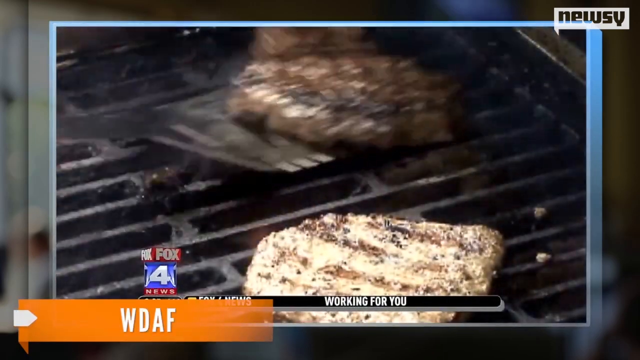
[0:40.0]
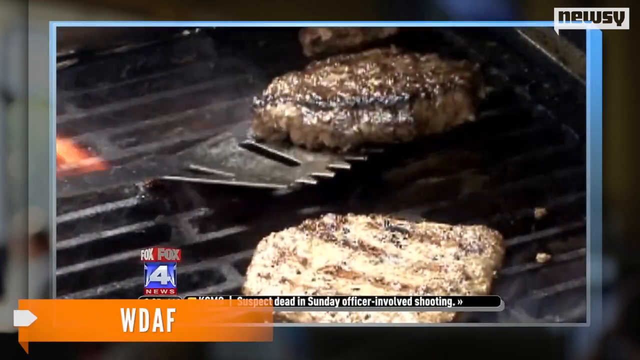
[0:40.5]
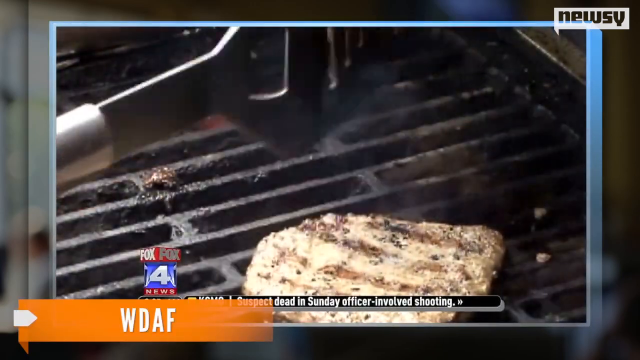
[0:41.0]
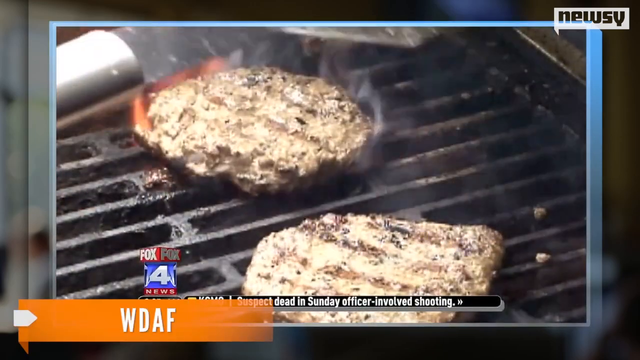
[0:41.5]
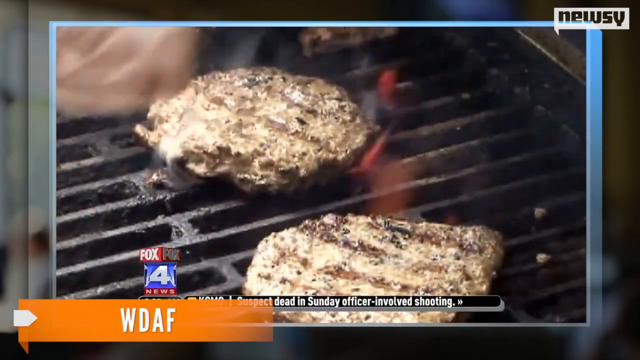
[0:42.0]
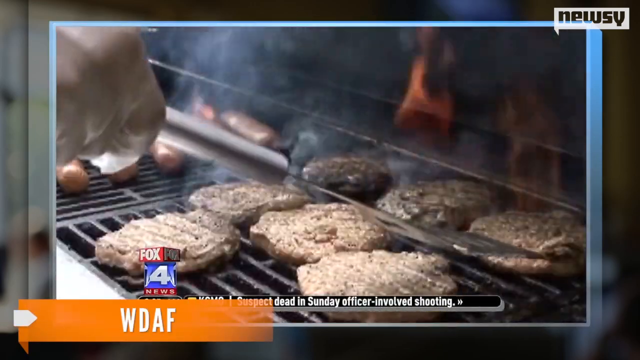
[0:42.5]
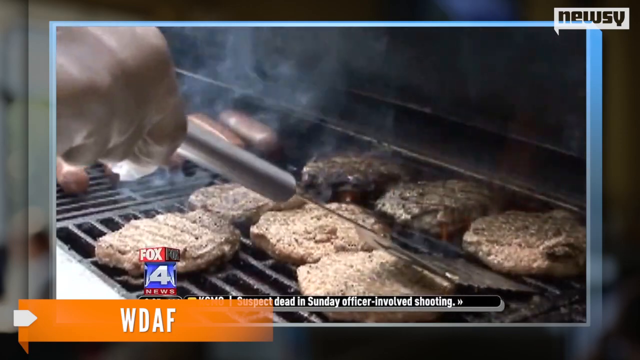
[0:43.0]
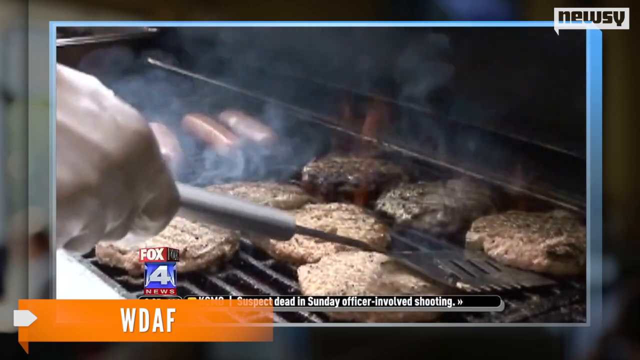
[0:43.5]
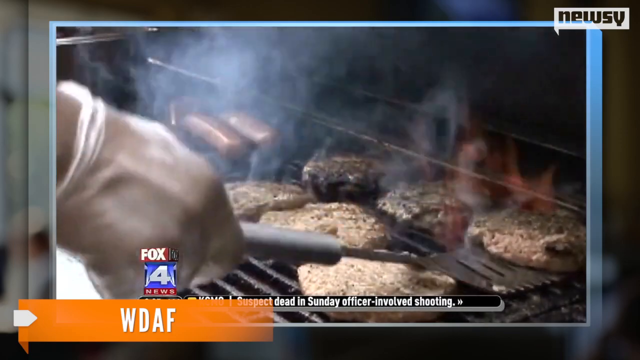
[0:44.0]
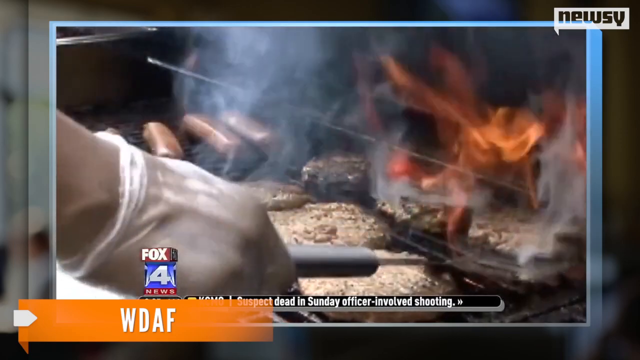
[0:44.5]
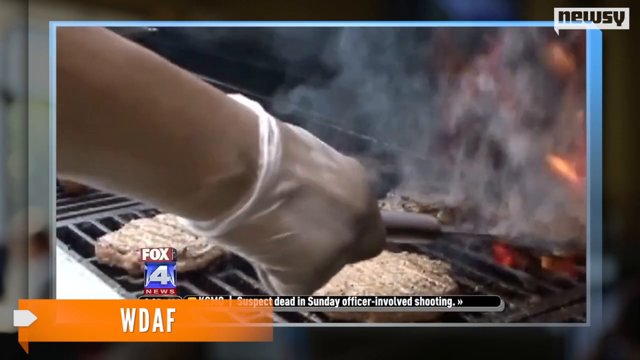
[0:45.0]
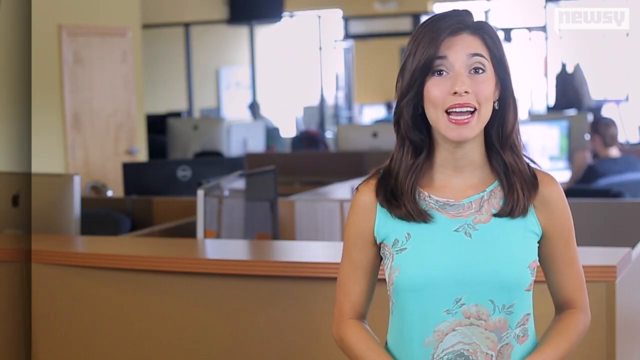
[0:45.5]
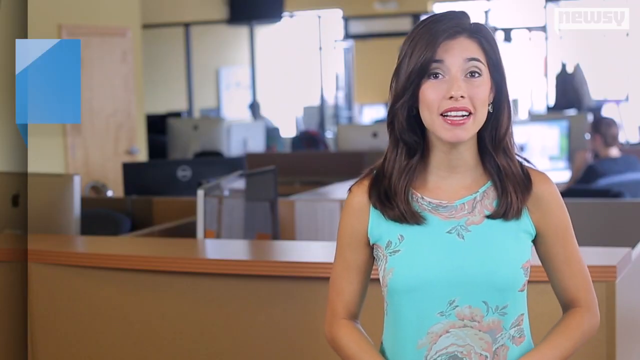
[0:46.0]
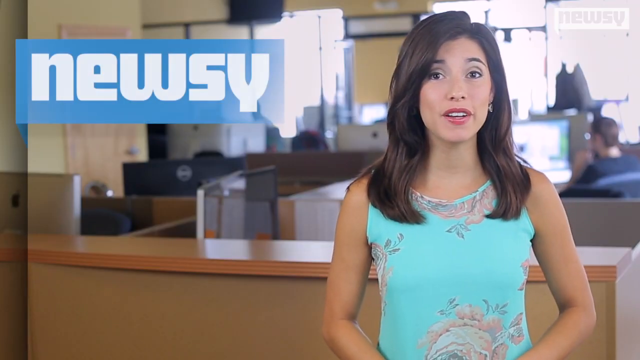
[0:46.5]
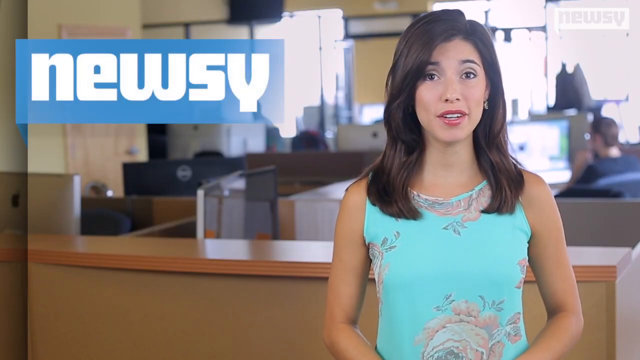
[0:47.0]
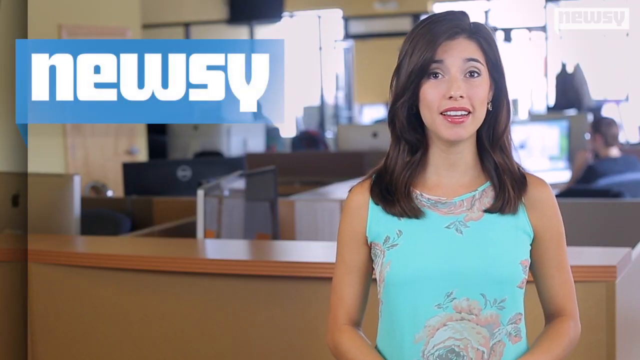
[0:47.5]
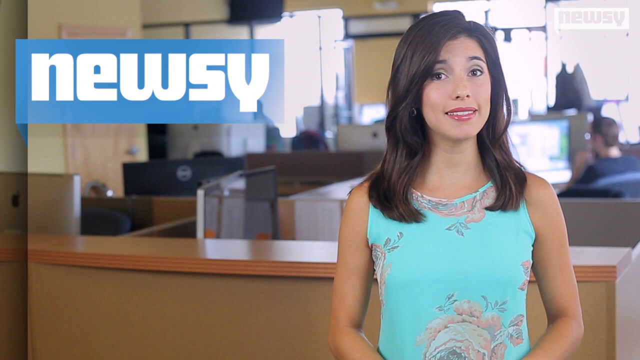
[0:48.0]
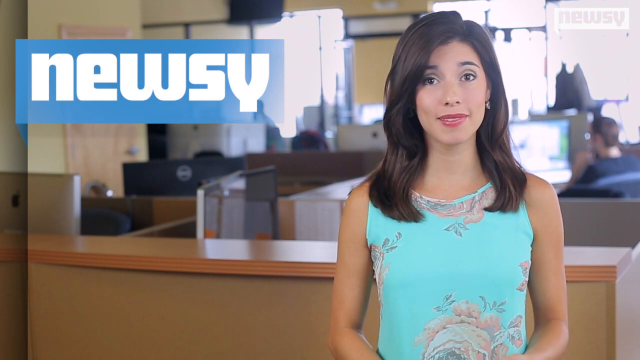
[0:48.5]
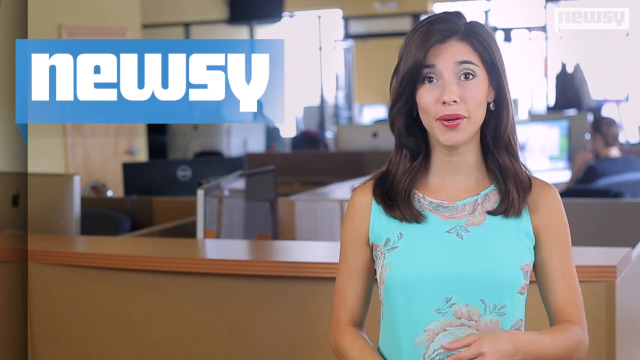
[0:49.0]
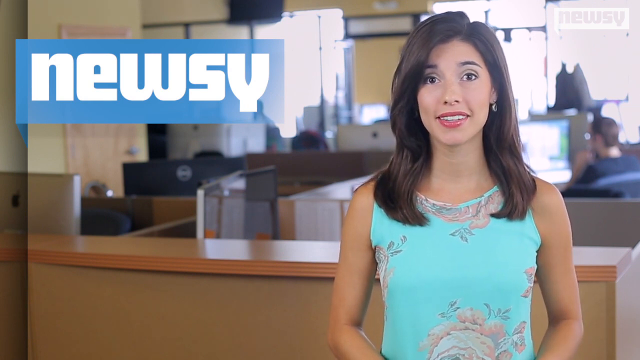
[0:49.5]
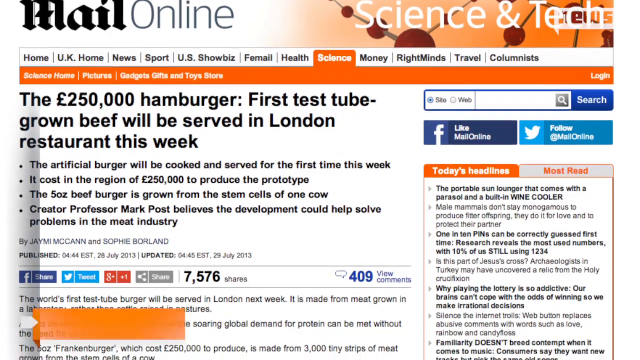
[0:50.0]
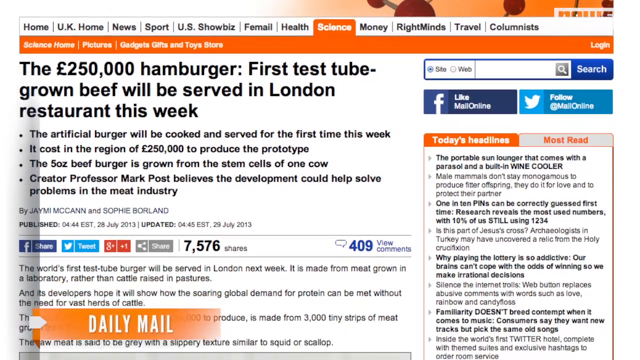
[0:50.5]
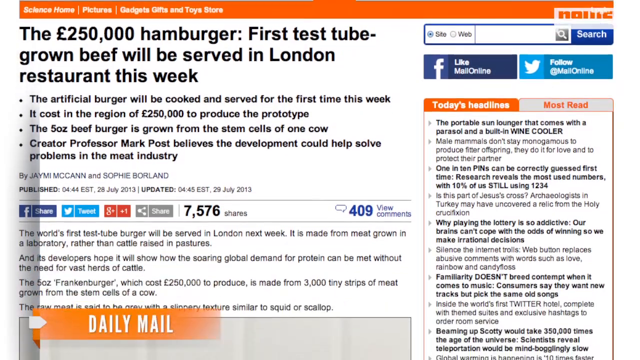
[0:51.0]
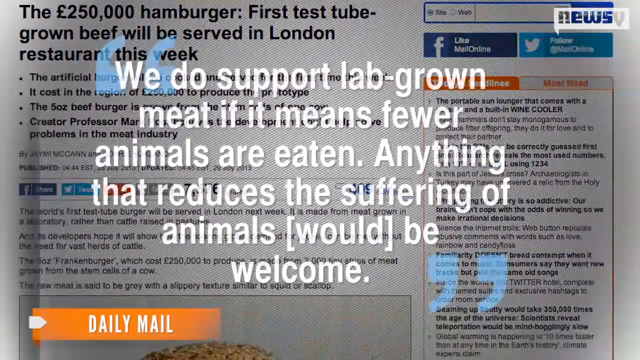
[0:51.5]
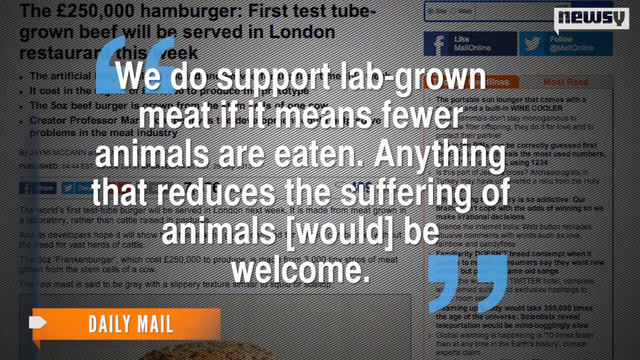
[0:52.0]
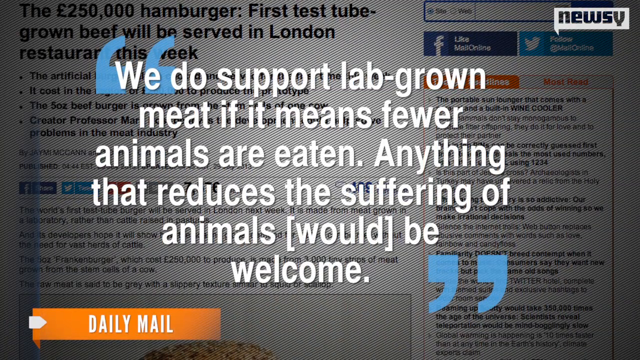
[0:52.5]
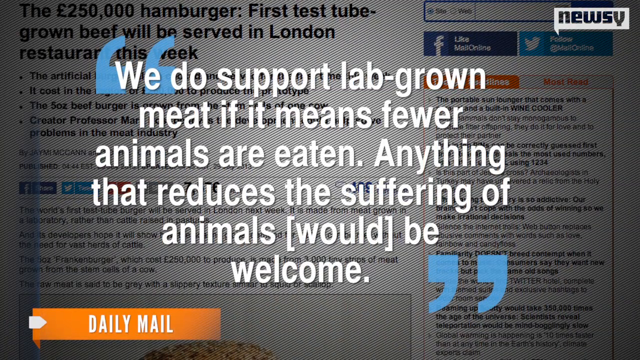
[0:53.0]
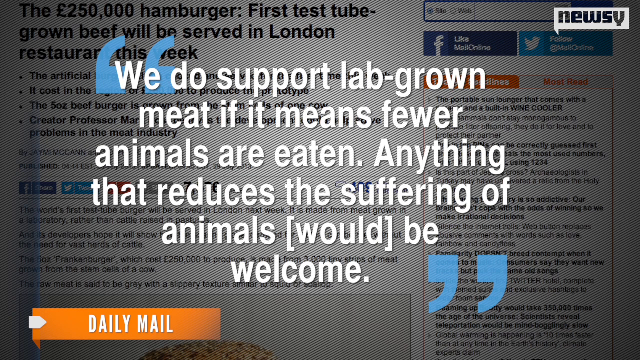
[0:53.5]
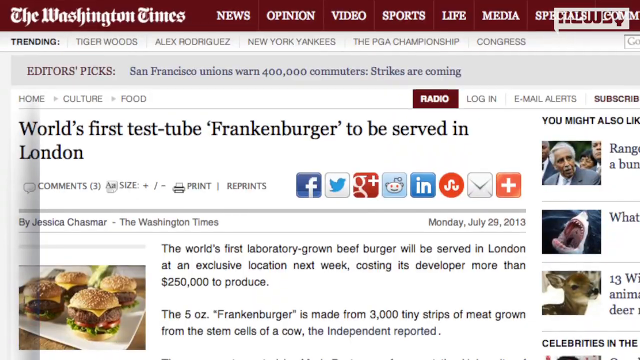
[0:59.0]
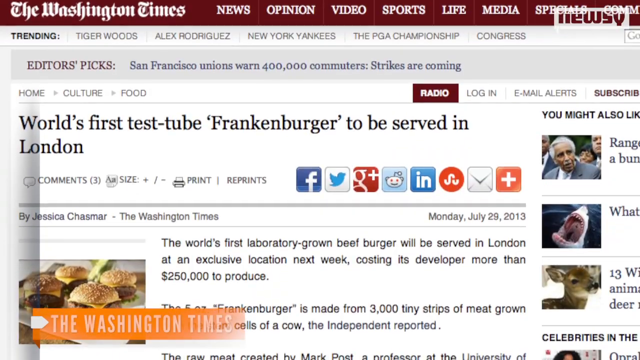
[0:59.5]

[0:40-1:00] Patties are put on a pan over an open fire and cooked. A hand uses a stainless steel spatula. The patties on the fire seem to be seven in number. The female presenter appears in the newsroom, with "Newsy" still written in white on the blue background. She shows a post on a website that reads "test tube grown beef will be served in London this week" and continues: "We do support lab-grown meat if it means fewer animals are eaten. Anything that reduces the suffering of animals would be welcome."